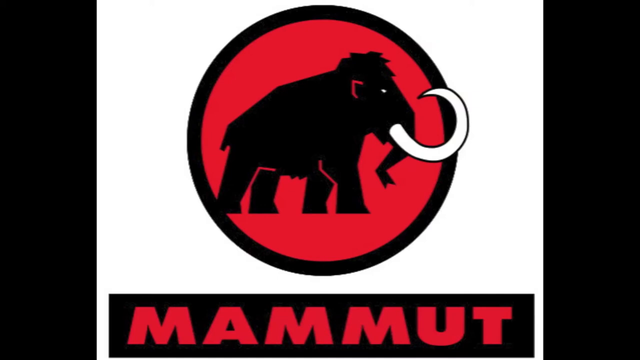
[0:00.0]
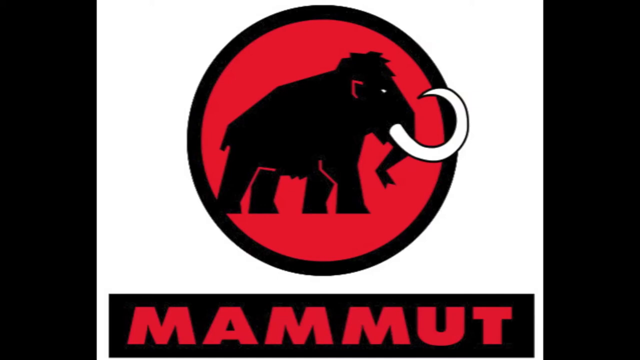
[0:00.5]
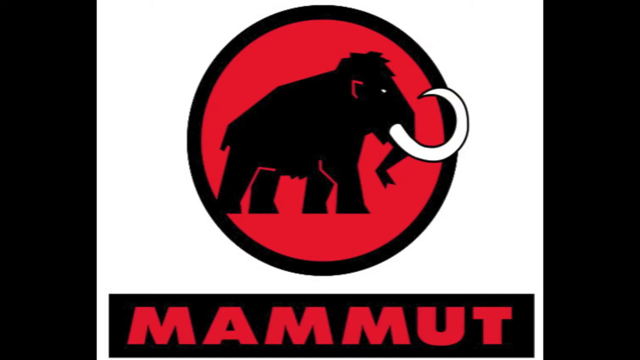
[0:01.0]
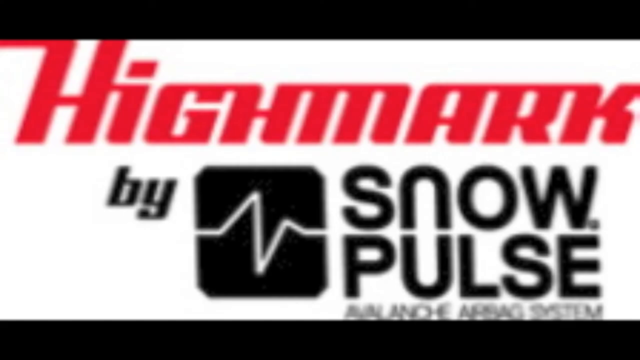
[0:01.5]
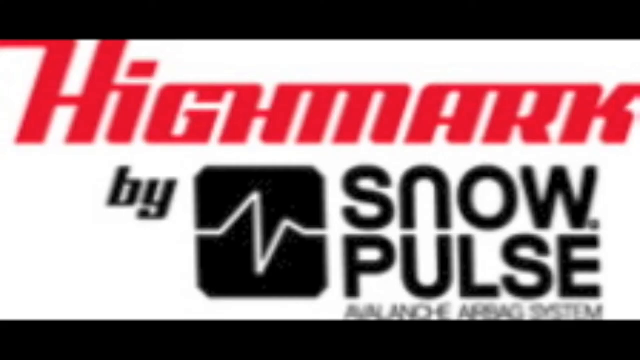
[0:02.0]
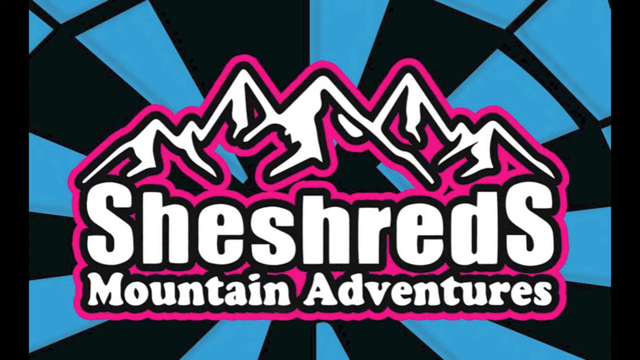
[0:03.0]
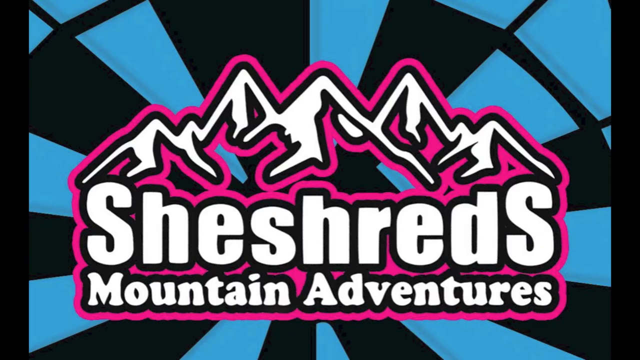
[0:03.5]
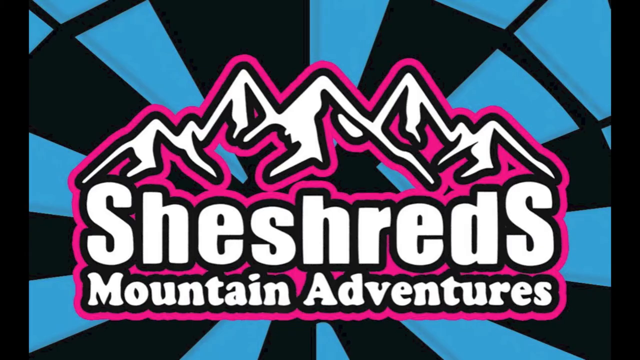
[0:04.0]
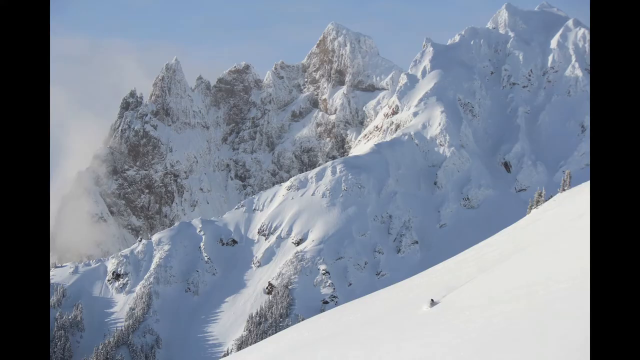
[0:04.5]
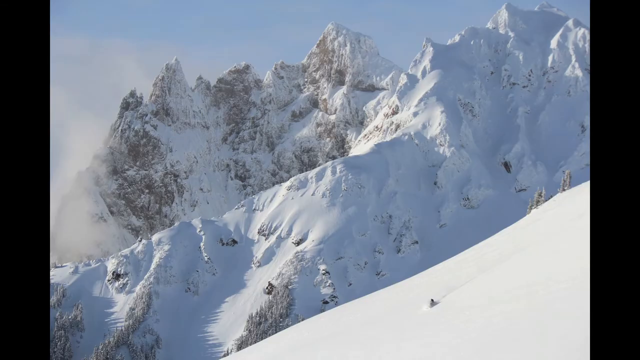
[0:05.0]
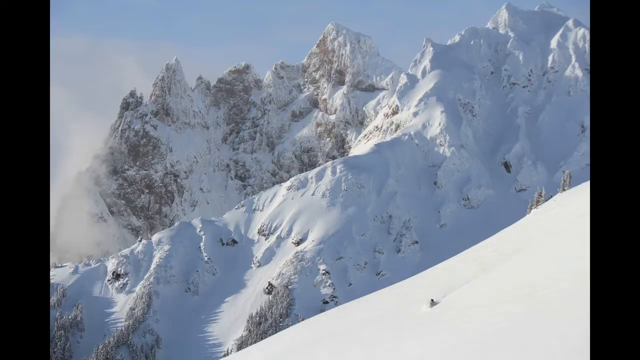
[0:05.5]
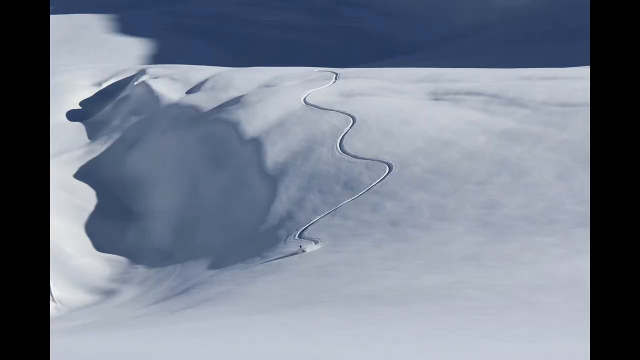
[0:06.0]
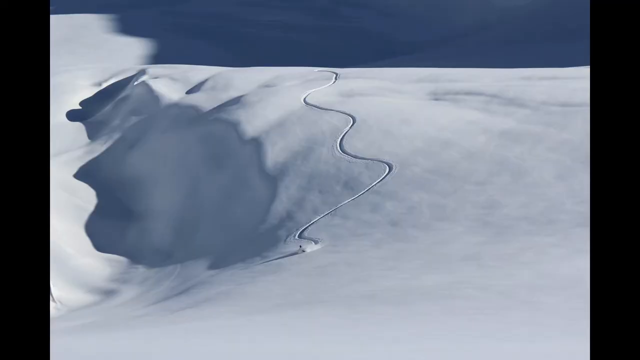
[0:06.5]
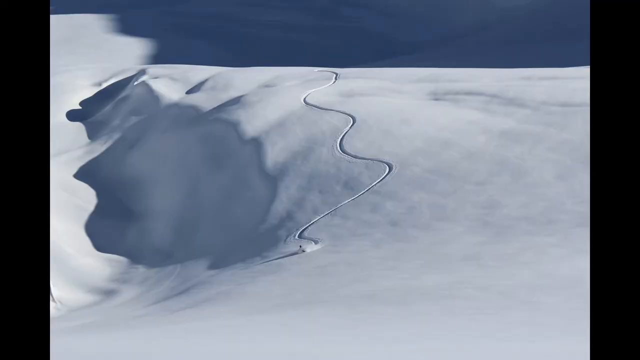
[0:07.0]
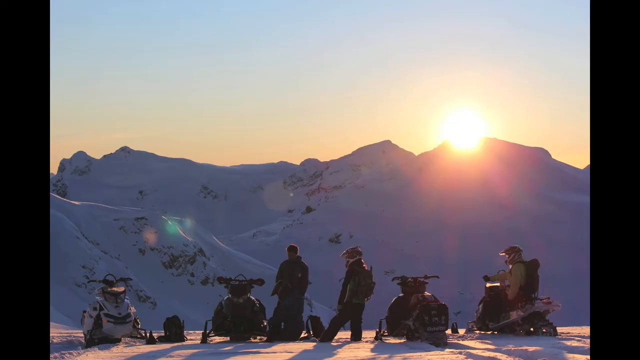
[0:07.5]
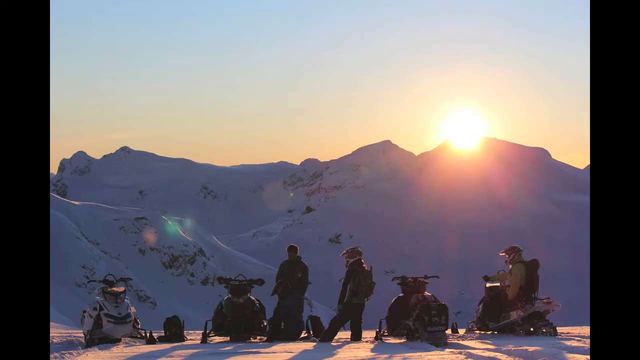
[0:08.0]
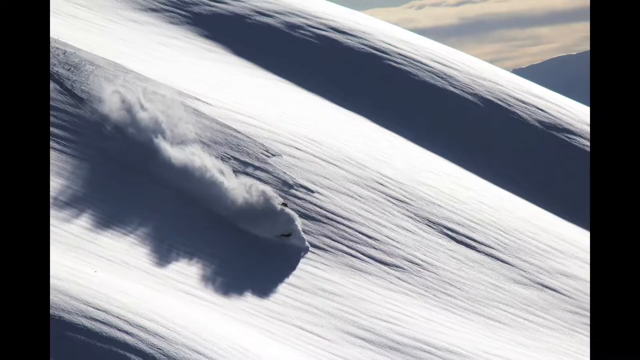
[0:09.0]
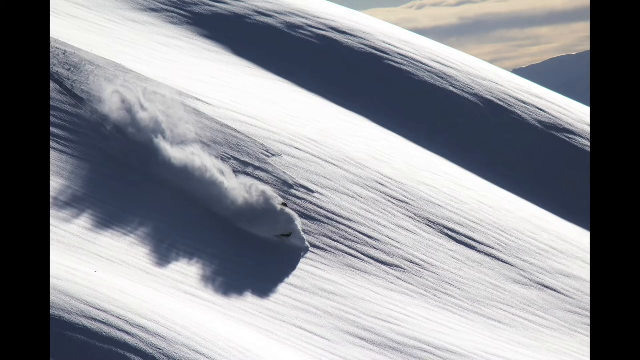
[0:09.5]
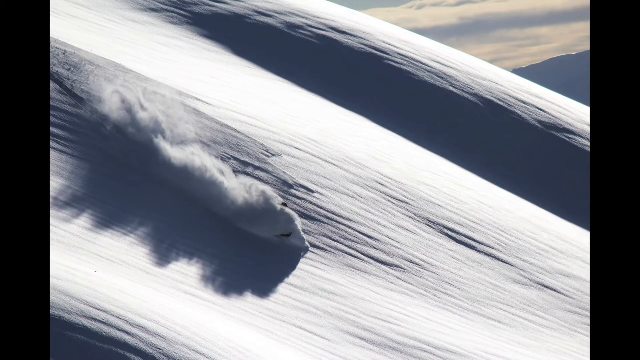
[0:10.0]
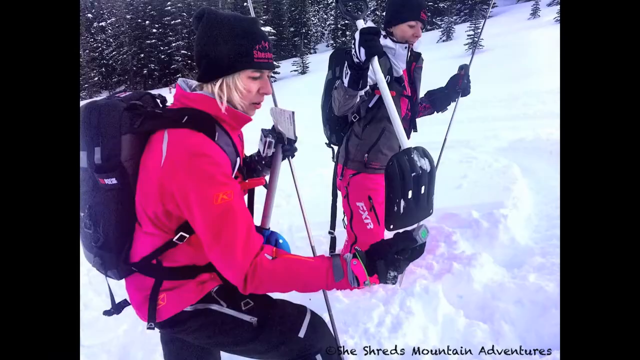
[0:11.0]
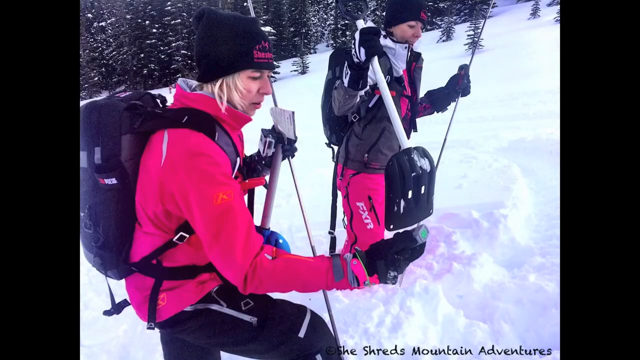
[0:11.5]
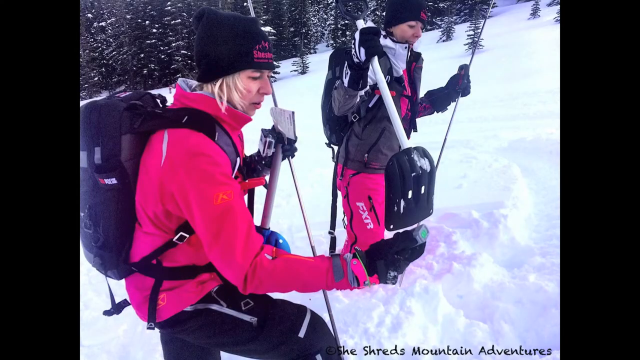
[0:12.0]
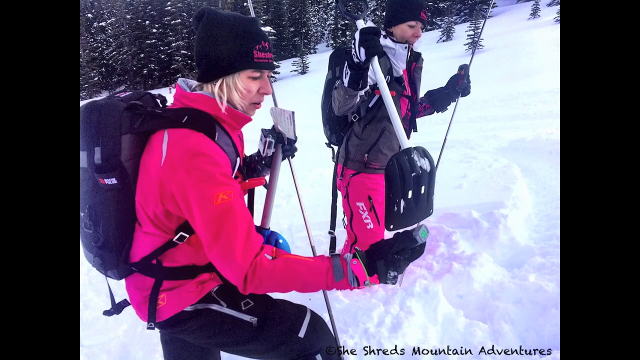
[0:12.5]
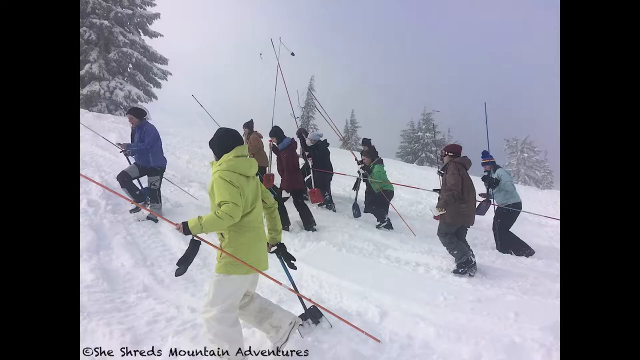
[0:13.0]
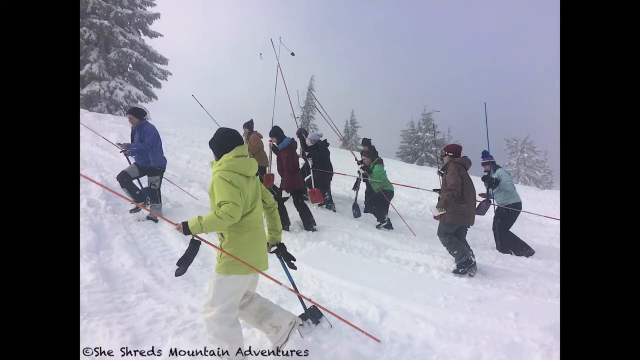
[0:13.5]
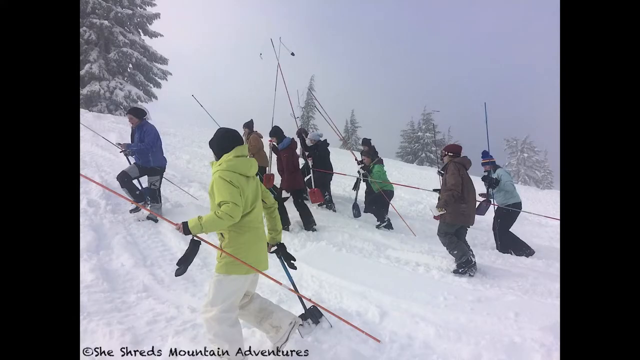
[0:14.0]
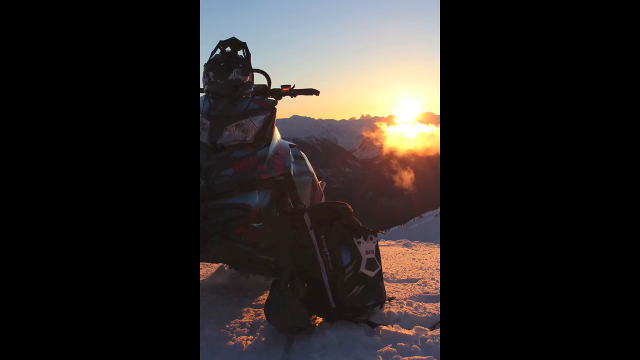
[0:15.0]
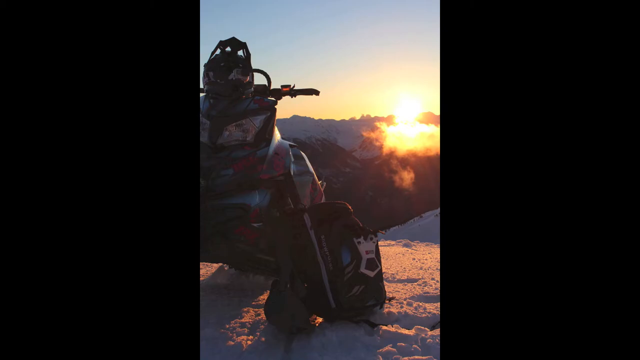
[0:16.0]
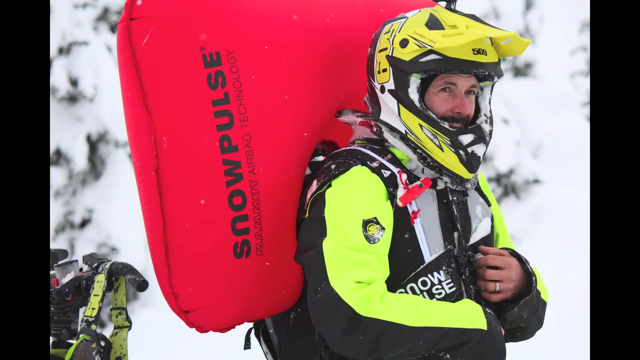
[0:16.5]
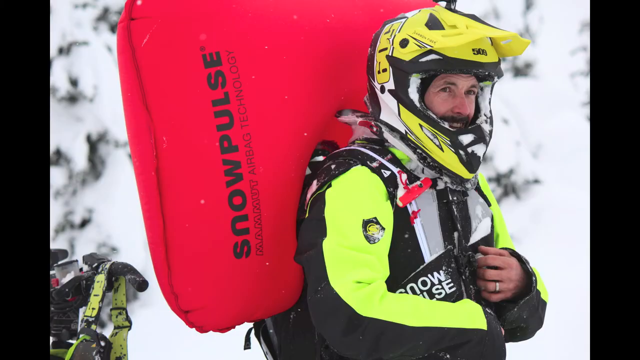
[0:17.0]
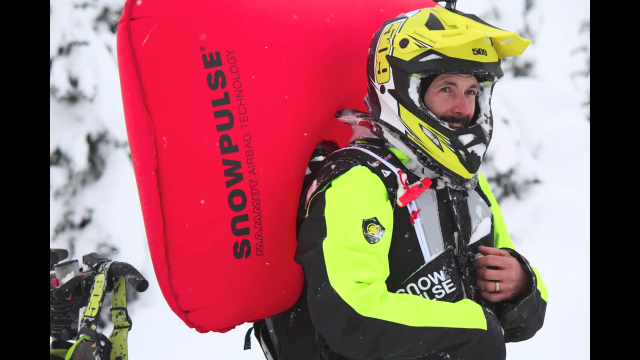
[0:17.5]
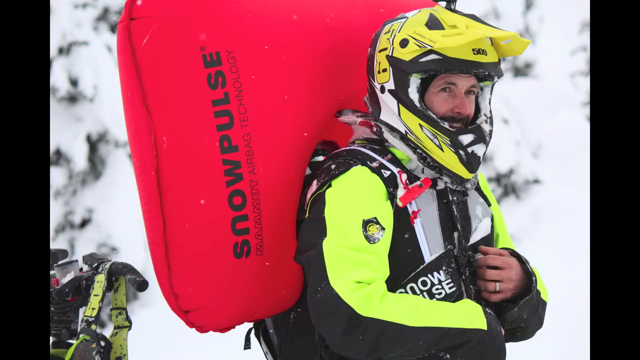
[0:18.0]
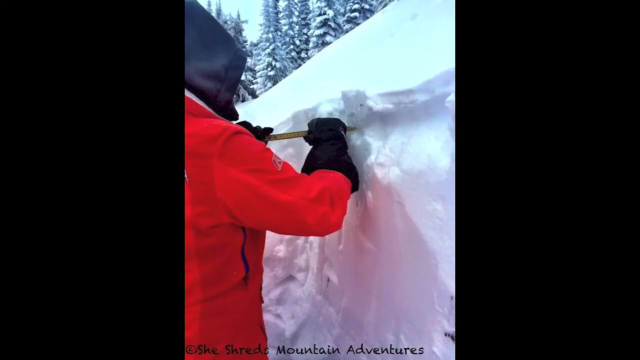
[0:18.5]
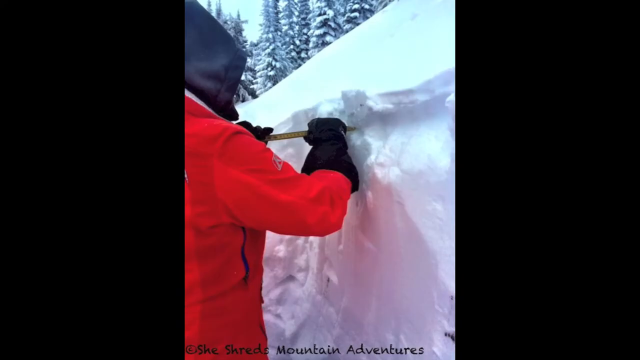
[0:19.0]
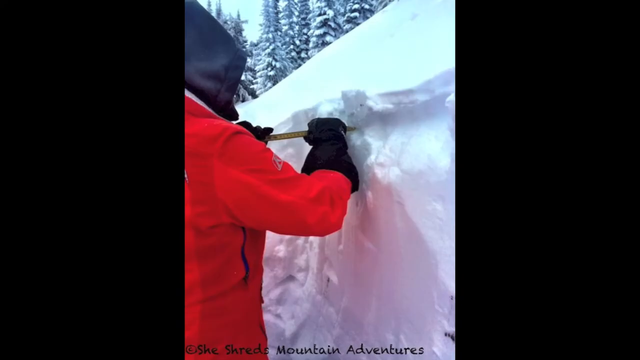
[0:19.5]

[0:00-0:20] A black elephant with white tusks appears in front of a red circle with a black border, and behind that is what looks like a white background. At the bottom, red text reads "Mammut". The video cuts to another slide with red text reading "Highmark" and black text reading "by Snow Pulse", along with an icon that kind of looks like a pulse, with a white line going up and down. Next comes another logo showing what looks like a range of snow-capped mountains with a pink border, white text in the middle reading "She Shreds Mountain Adventures", and a blue and black background. The video then cuts to an actual mountain range covered in snow, followed by a picture of what looks like a mountain with something like a trail on it. Different pictures of mountain ranges follow, including what appears to be an avalanche, then two people walking on snow, and then a group of people walking up a hill covered in snow.